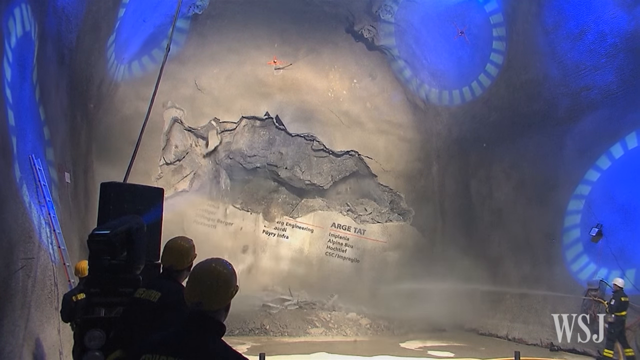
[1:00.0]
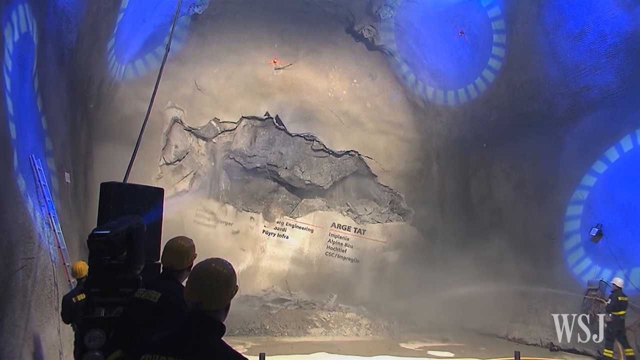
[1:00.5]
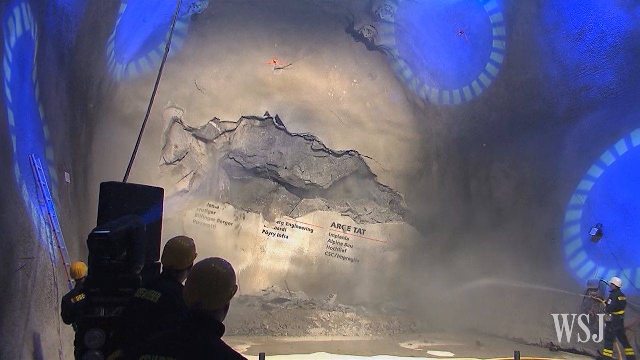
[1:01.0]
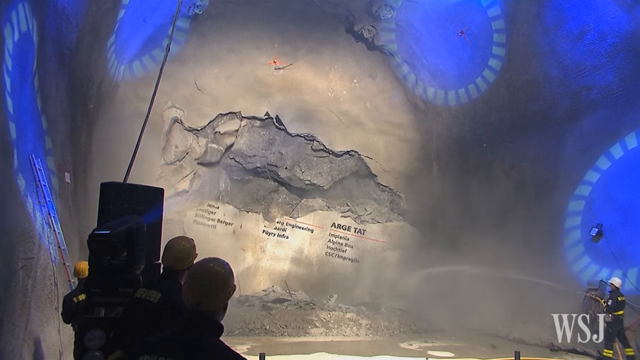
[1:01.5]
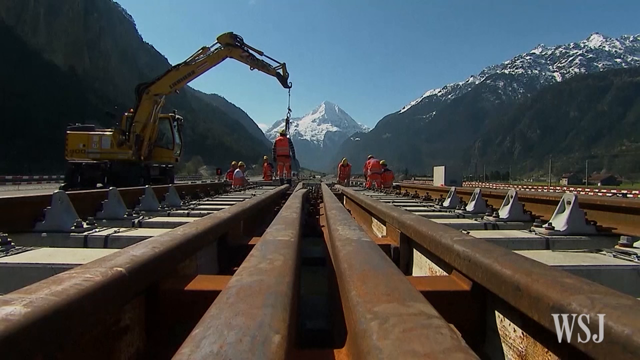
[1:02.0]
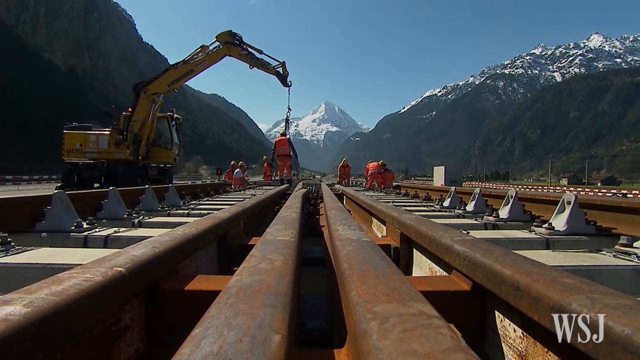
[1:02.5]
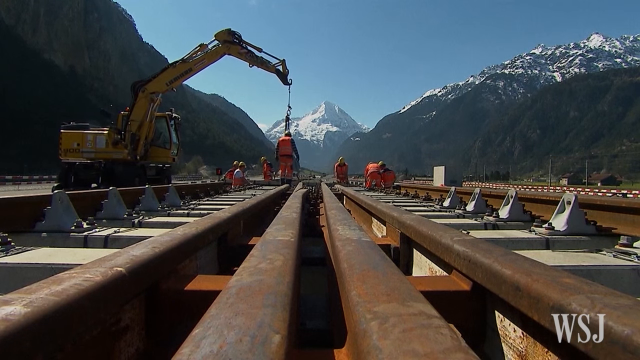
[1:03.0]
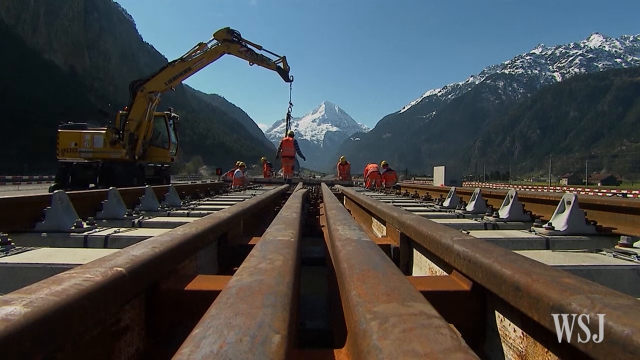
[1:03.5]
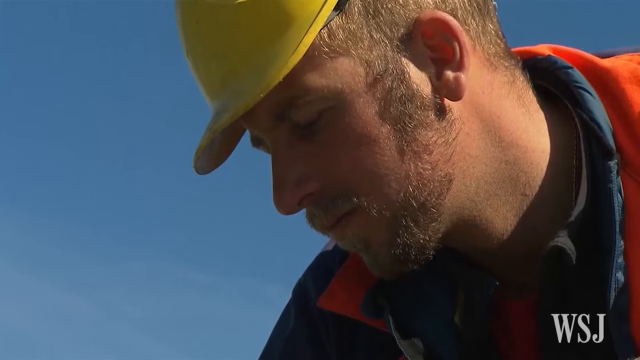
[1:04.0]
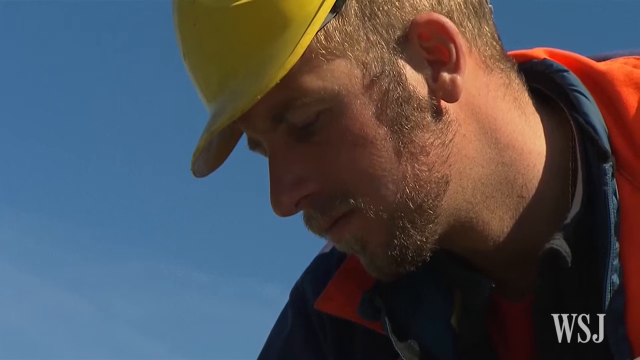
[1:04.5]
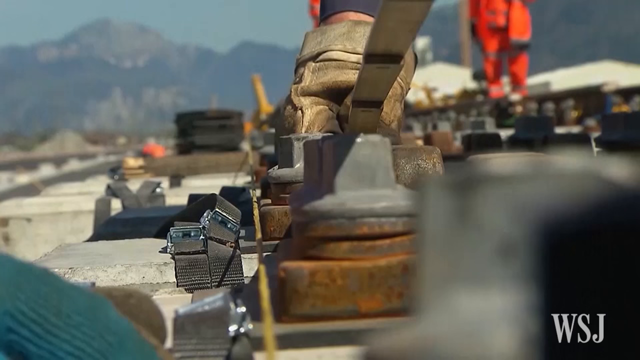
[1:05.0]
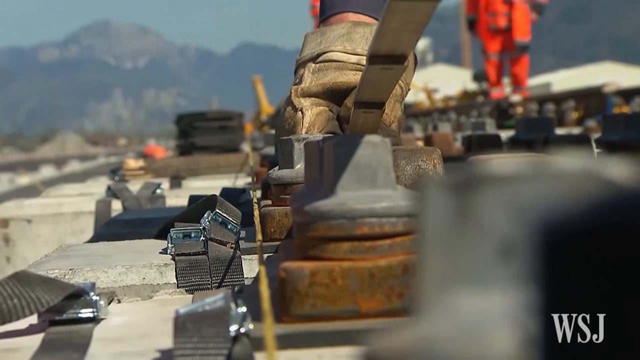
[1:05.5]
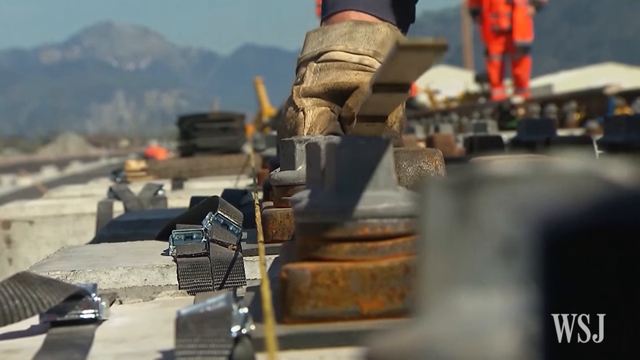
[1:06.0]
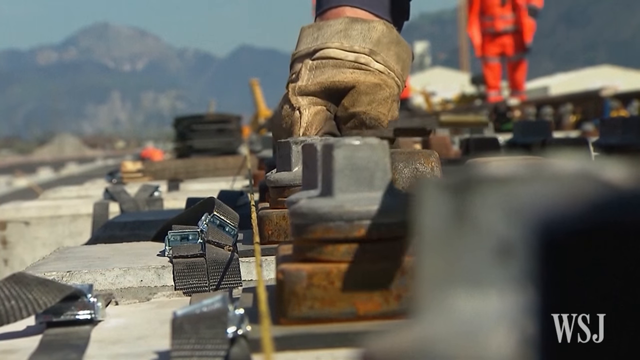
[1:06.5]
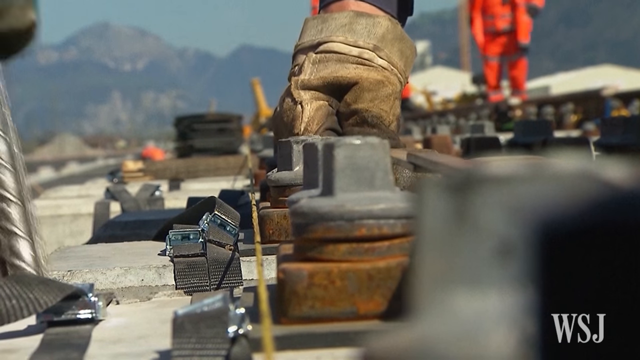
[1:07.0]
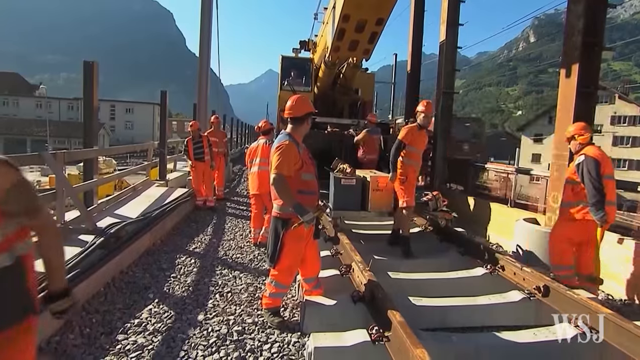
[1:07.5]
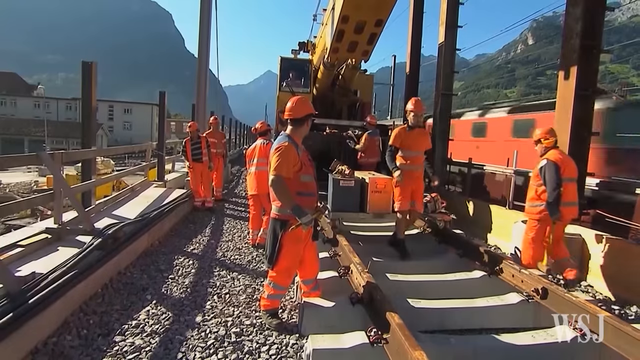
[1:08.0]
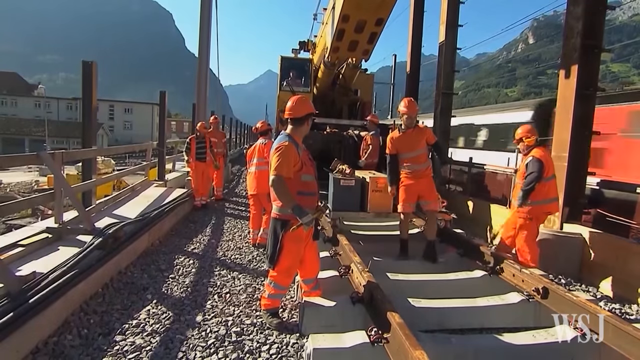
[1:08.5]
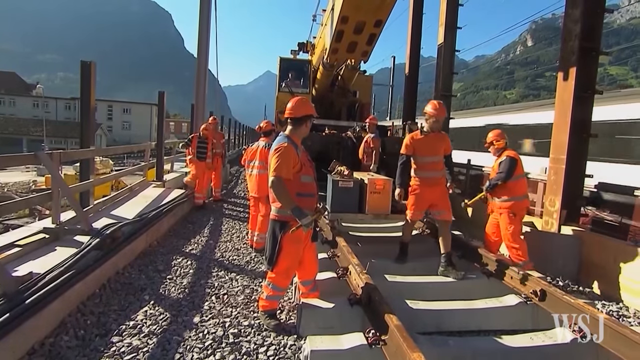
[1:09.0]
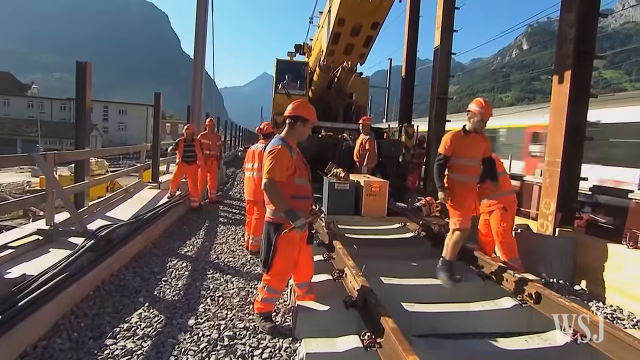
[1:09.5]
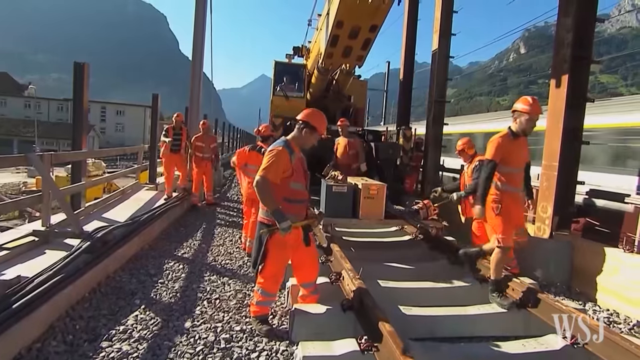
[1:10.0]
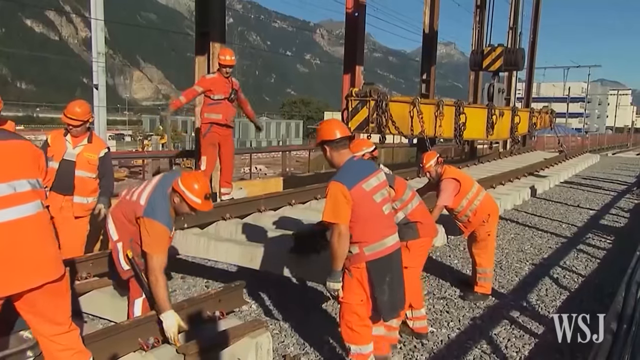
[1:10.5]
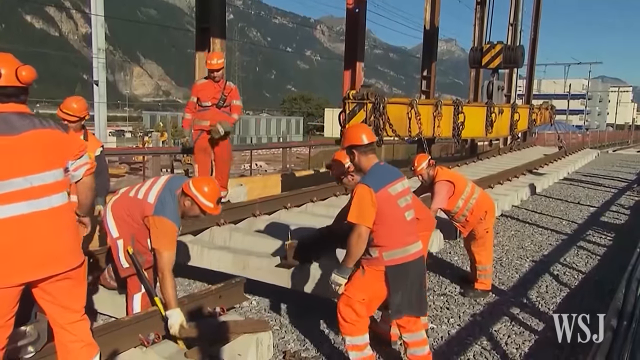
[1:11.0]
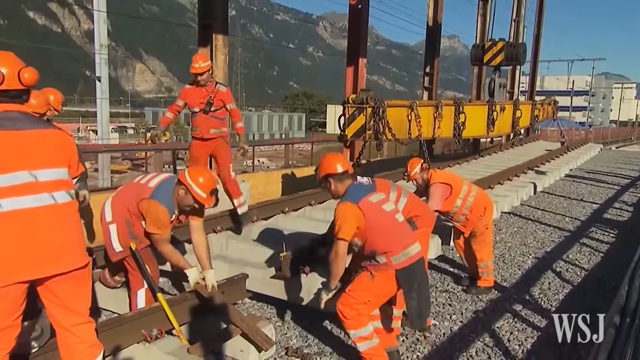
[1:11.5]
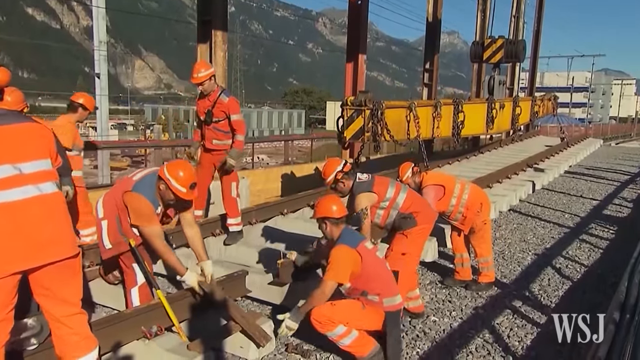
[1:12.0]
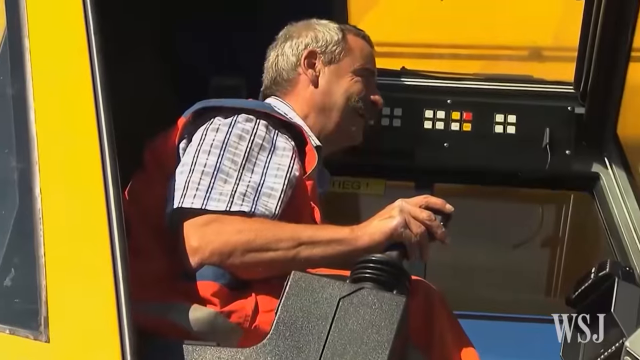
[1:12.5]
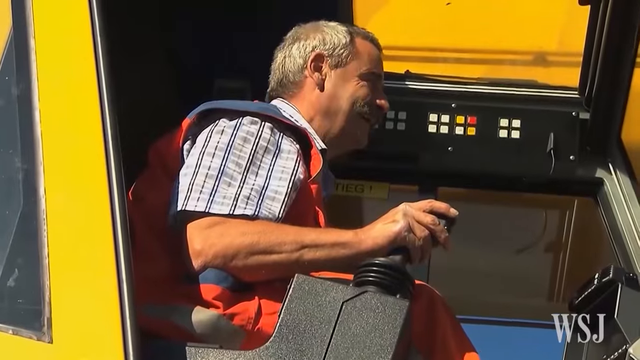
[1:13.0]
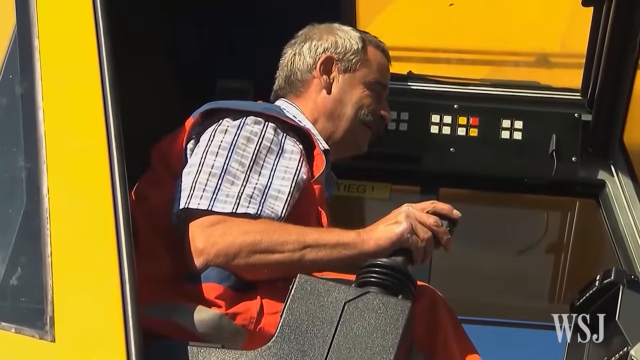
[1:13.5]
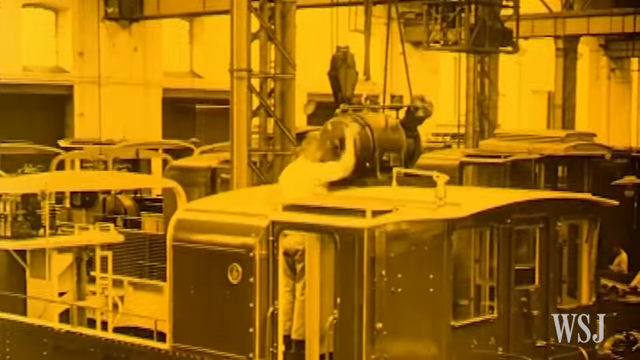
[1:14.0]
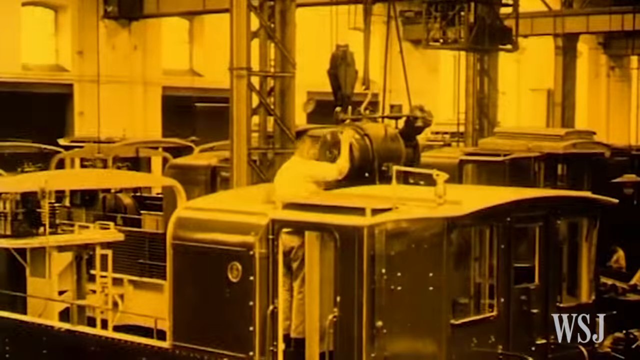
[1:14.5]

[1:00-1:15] The concrete falls apart with the workers gathered around it. The video then cuts to workers on the rail track, with a crane and mountains in the distance, possibly the Alps. The workers on the tracks look like they are maintaining things. A close-up shows a worker in a yellow hard hat who appears to be measuring something on the tracks. A group of men in orange appears, with different vehicles and maintenance materials, all wearing hard hats. A close-up shows an older man with a mustache in an excavator or some kind of vehicle, working the controls and apparently moving things. Suddenly an old-fashioned-looking video appears, almost black and white but yellow-tinted, seemingly showing how things used to be done on the rails.